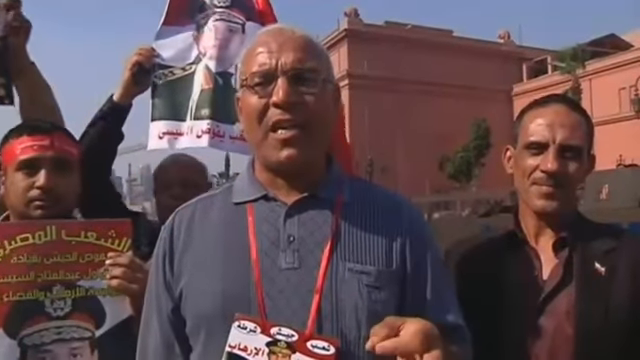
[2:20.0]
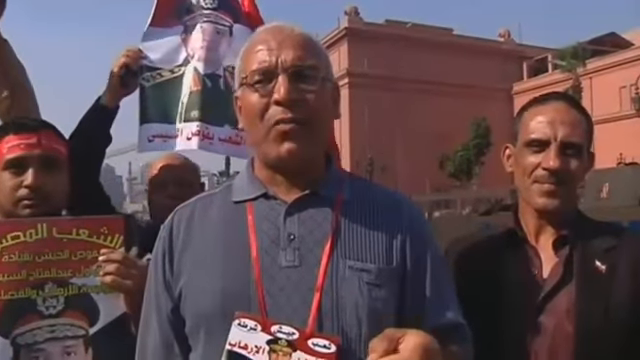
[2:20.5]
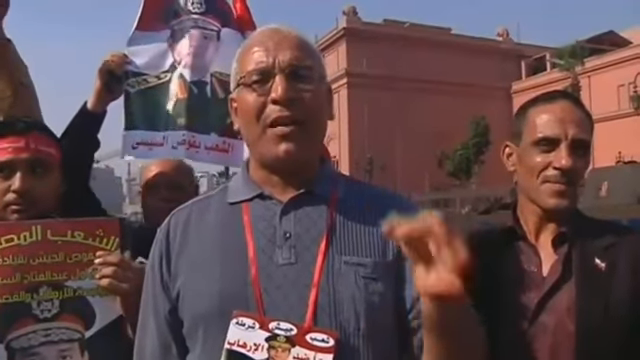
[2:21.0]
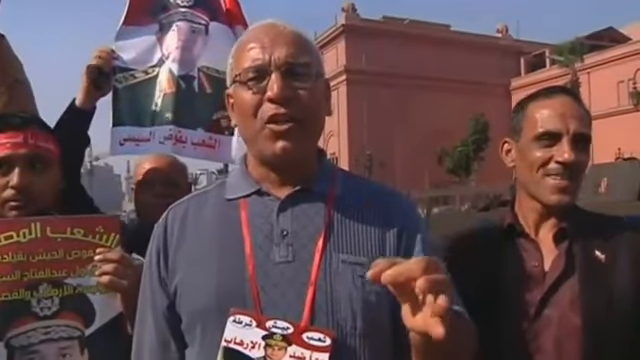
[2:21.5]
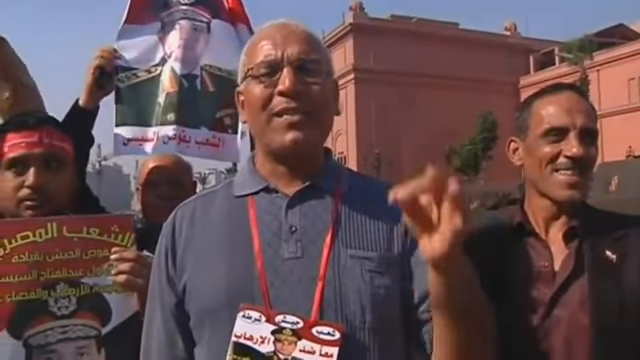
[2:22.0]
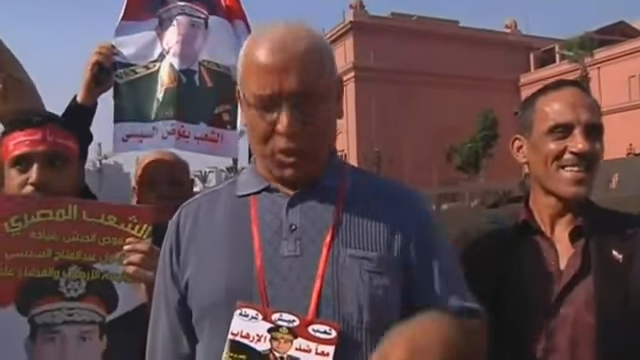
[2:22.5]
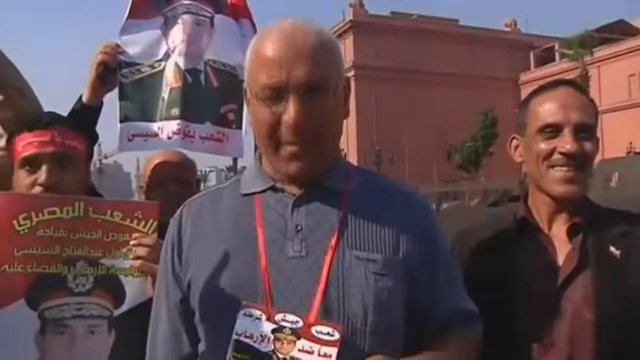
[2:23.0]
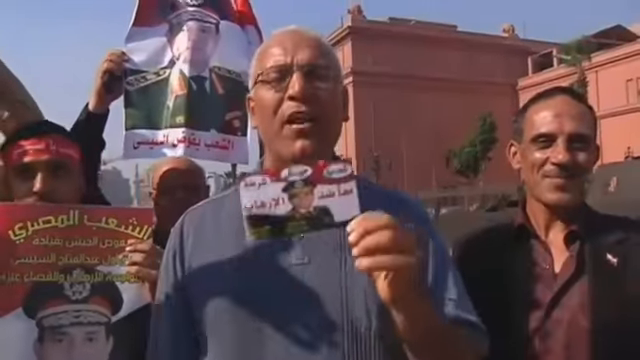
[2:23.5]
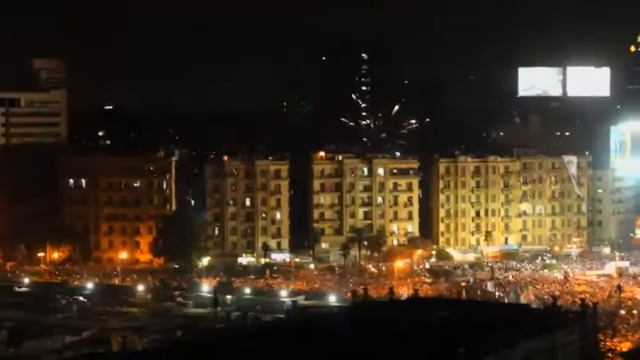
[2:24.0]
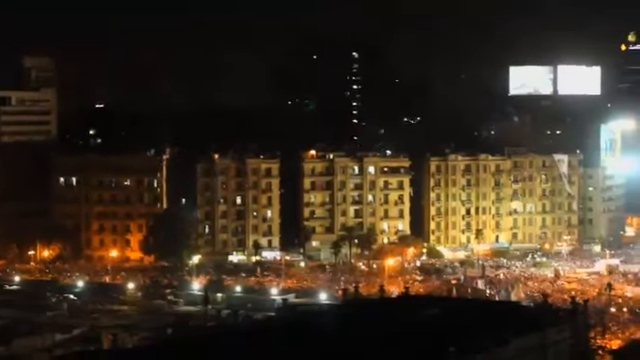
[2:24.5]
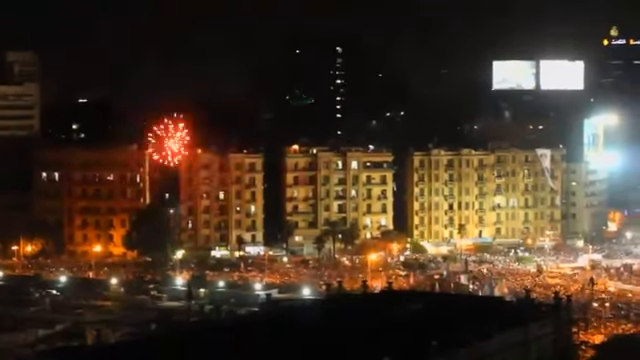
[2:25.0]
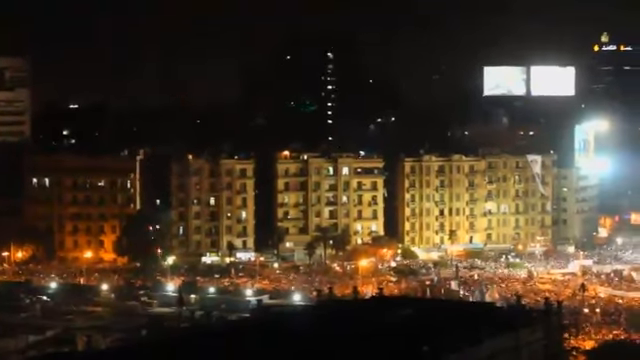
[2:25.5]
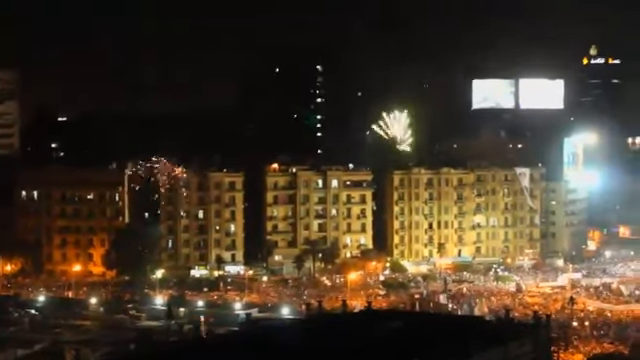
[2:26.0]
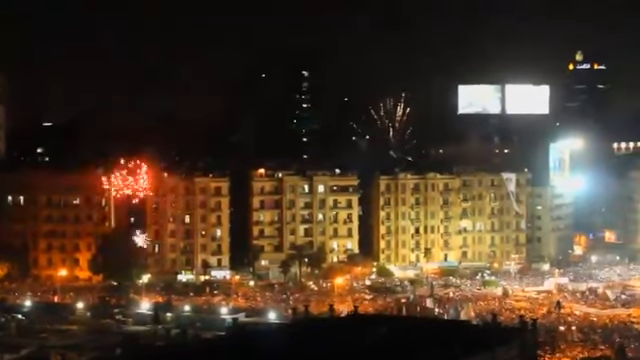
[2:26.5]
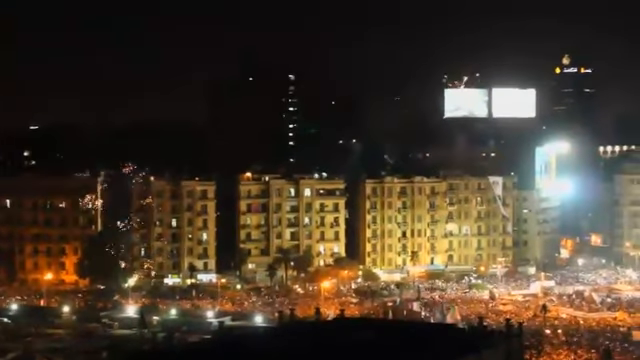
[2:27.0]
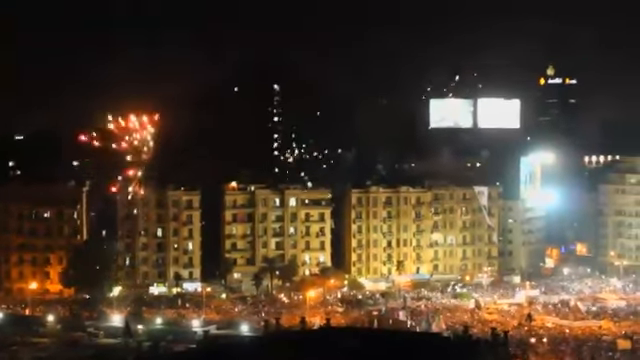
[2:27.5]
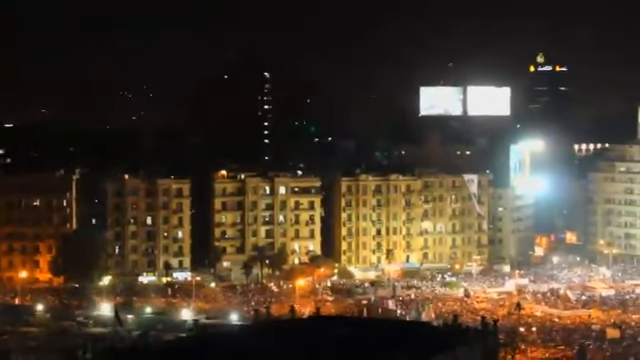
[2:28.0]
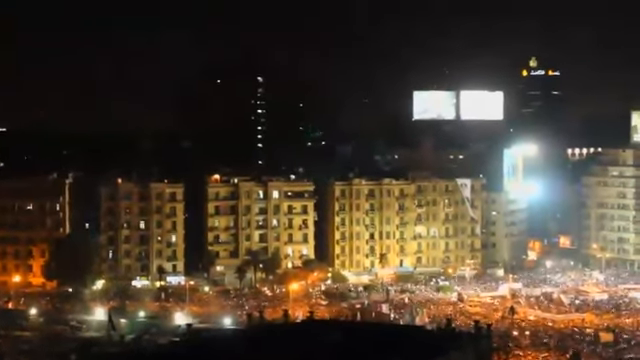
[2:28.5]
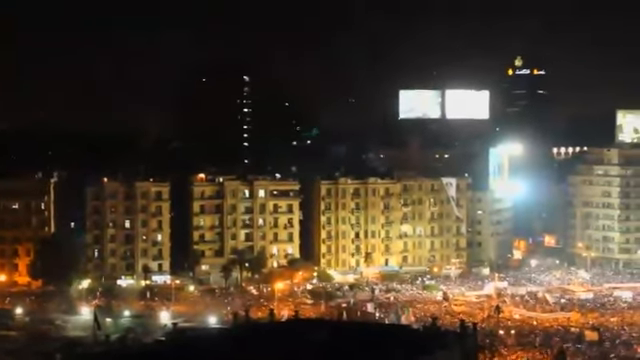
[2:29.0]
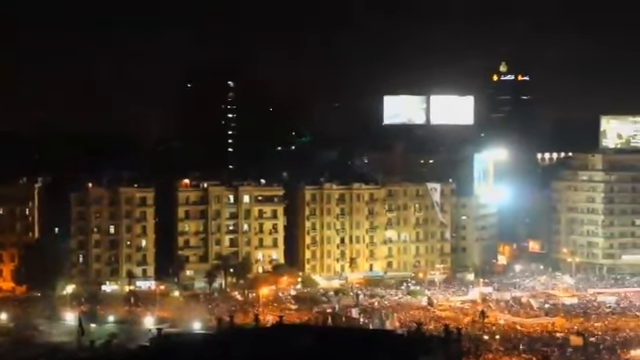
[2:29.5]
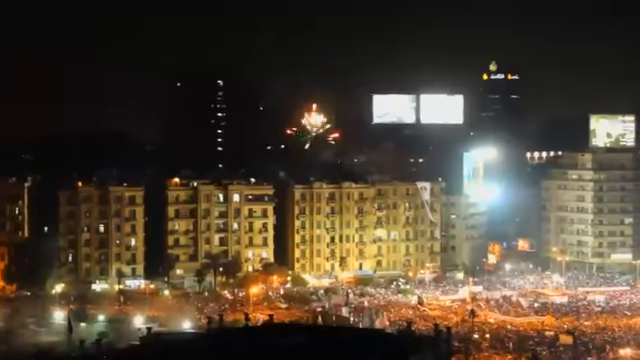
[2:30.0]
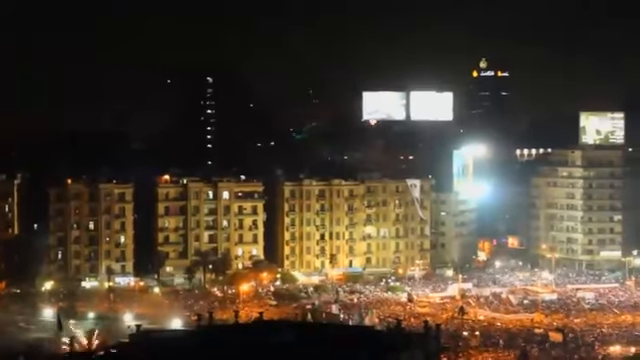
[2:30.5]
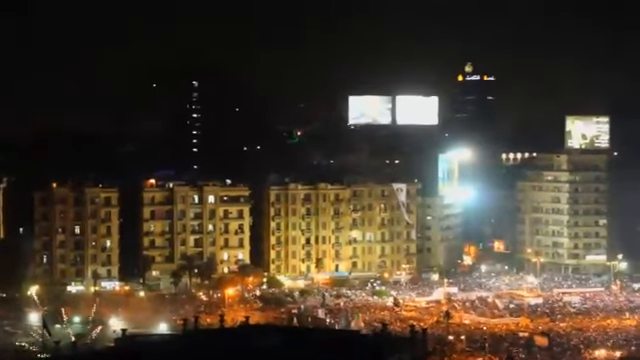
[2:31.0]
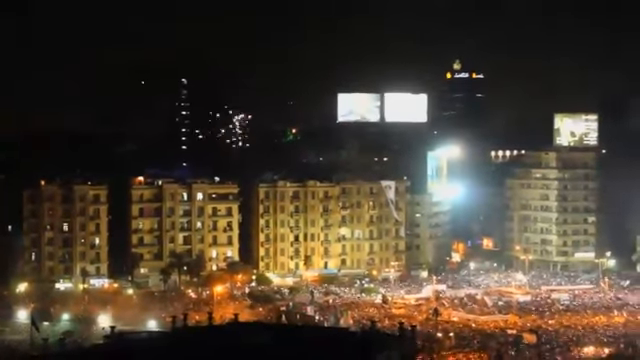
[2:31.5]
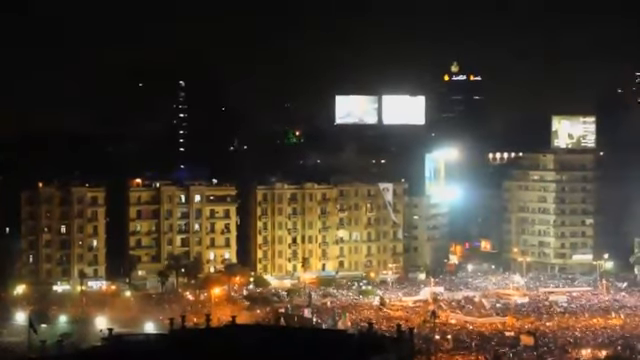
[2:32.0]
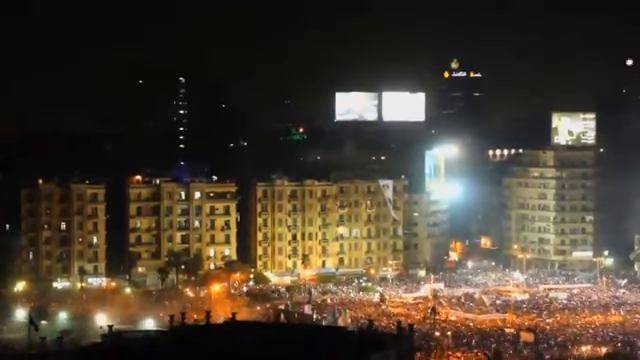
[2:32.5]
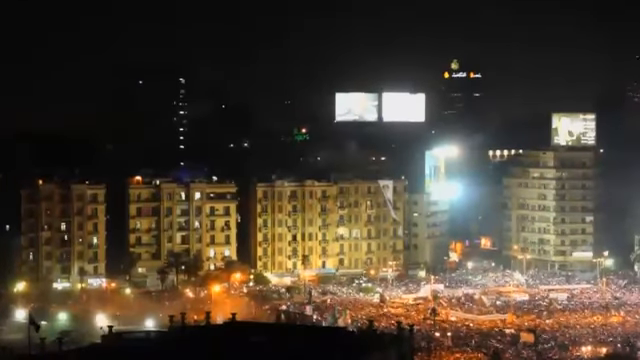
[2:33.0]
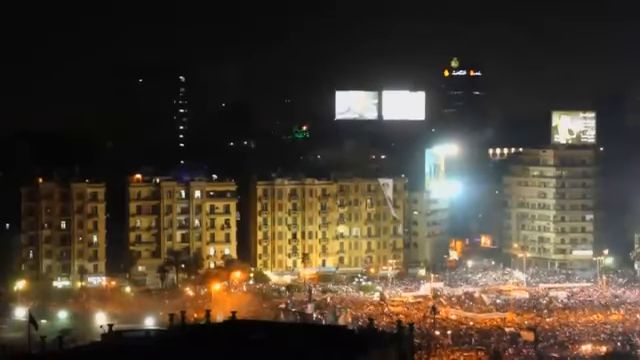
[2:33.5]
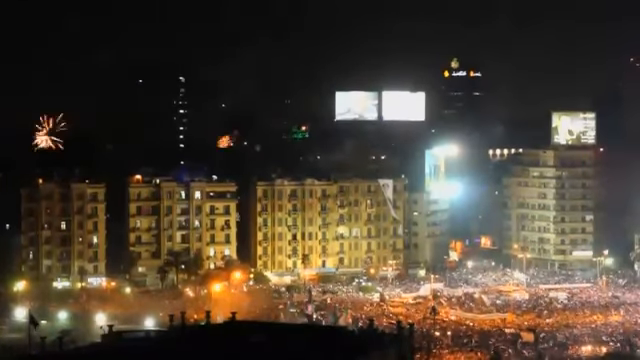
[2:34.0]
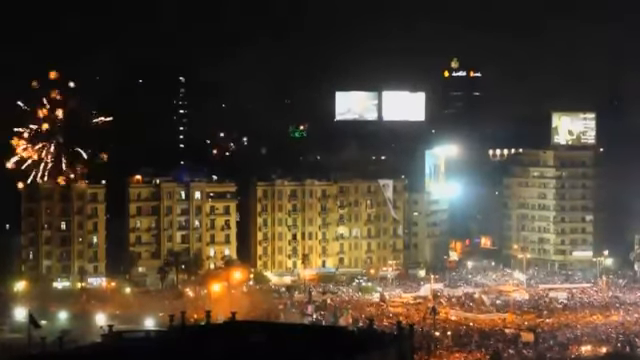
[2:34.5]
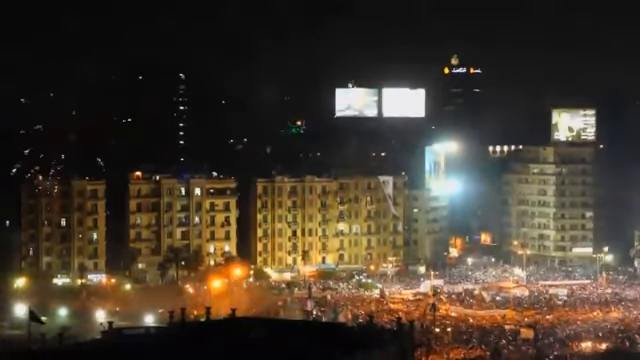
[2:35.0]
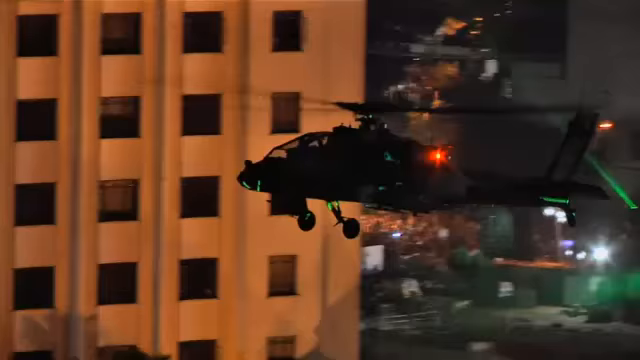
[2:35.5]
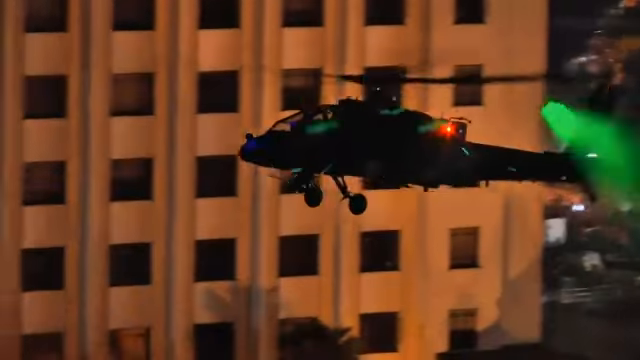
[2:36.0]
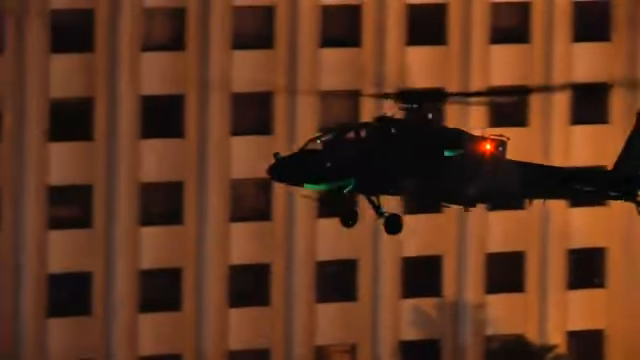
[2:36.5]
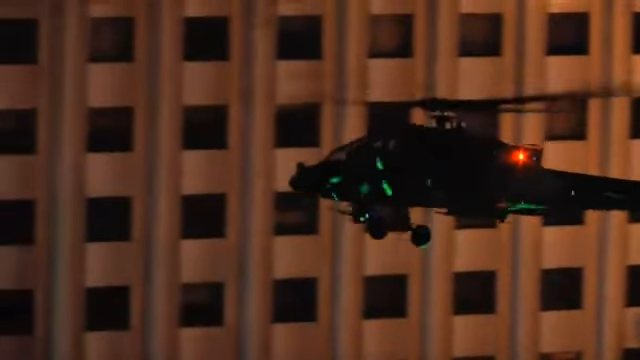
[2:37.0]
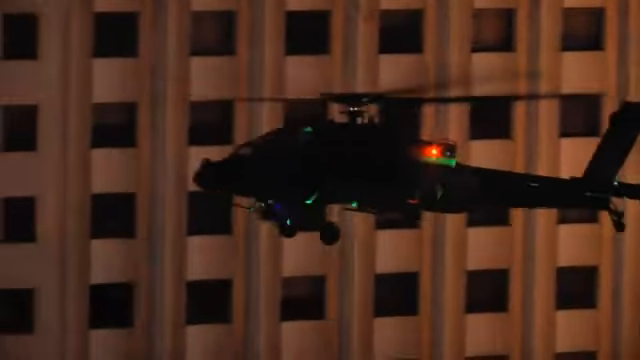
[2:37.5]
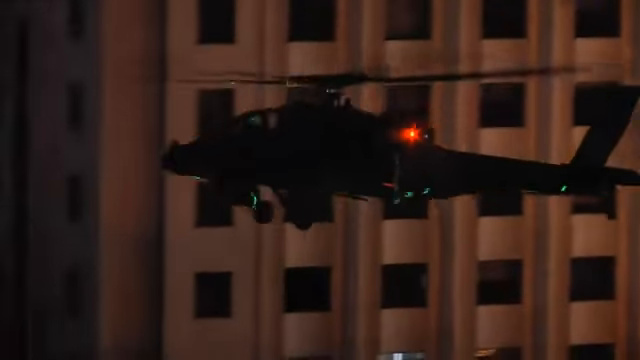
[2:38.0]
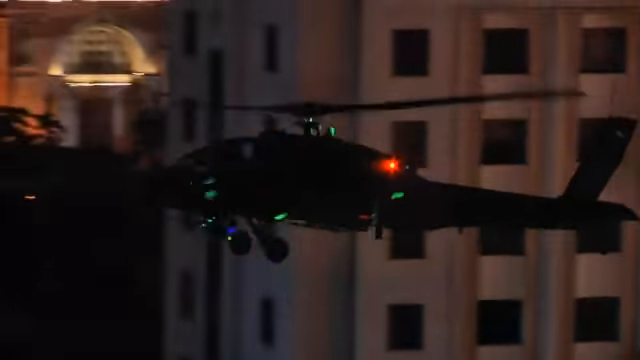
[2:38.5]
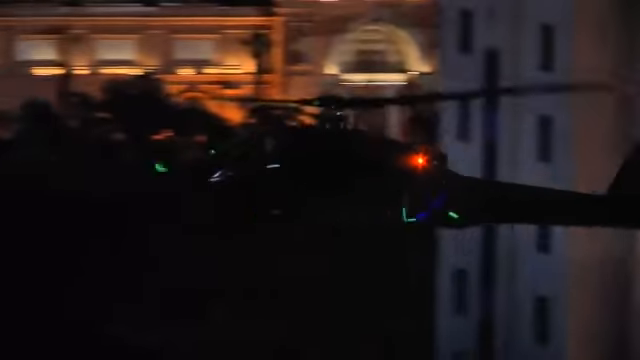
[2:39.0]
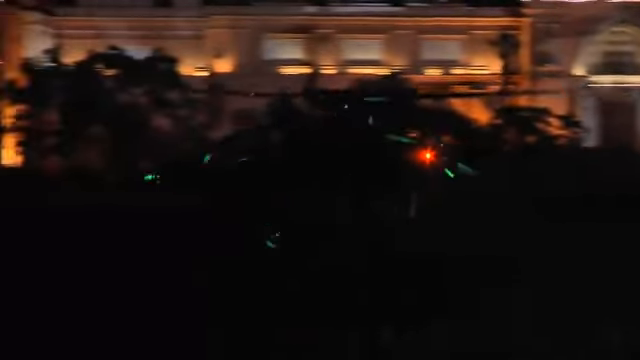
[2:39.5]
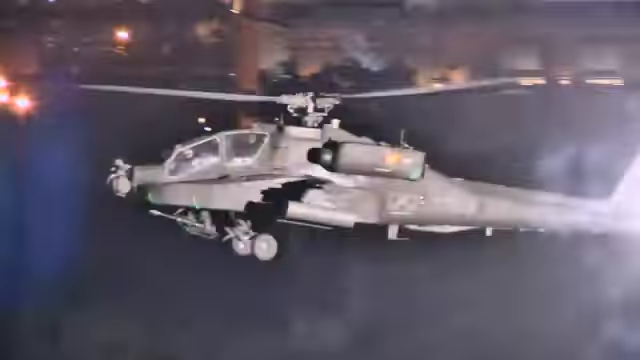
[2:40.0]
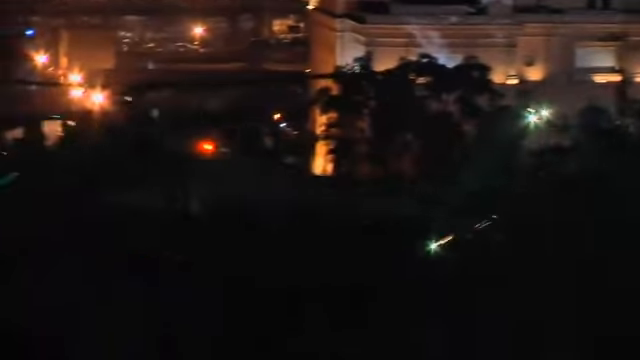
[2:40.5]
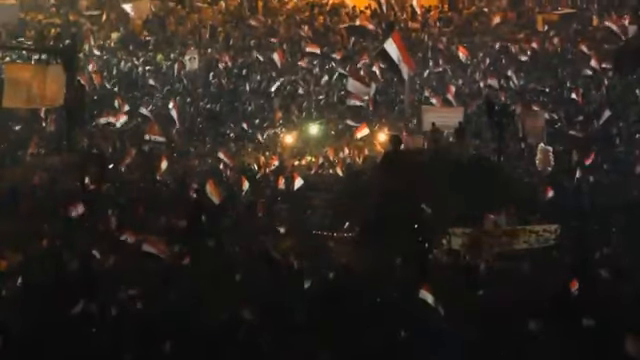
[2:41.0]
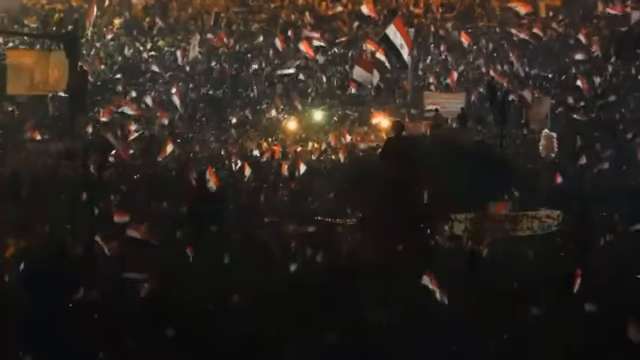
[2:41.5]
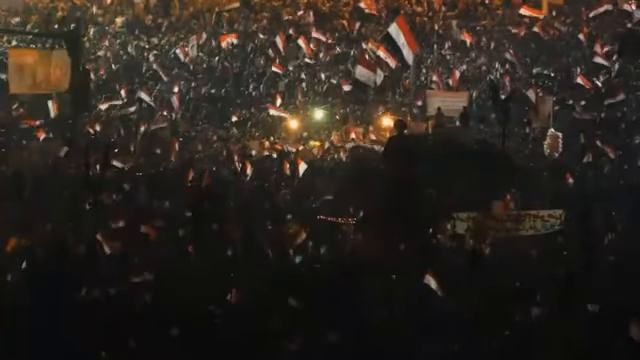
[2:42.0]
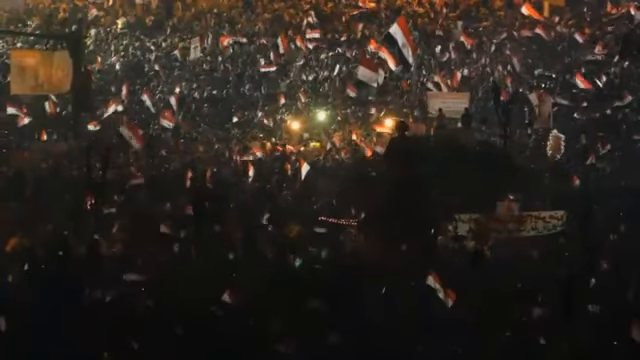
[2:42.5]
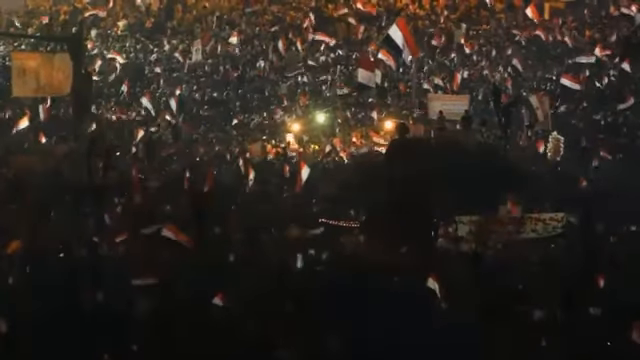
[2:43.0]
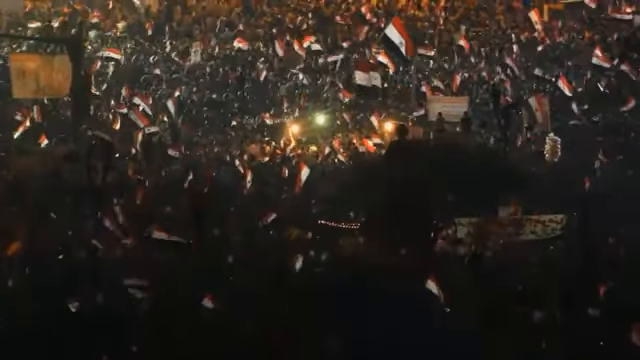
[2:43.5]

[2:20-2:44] The interrogation continues. People are throwing grenades into the air, and a helicopter is in the shot. Thousands of Egyptians wearing flags look happy, celebrating in the city streets with helicopters flying over them.